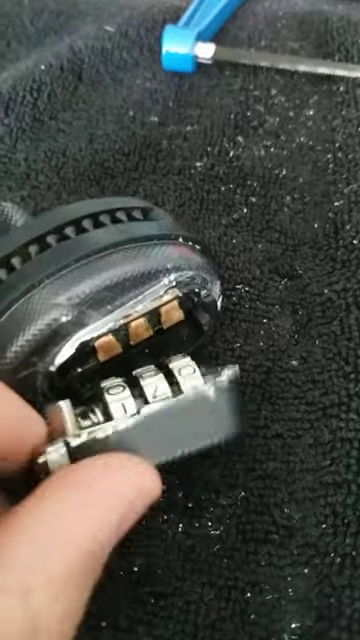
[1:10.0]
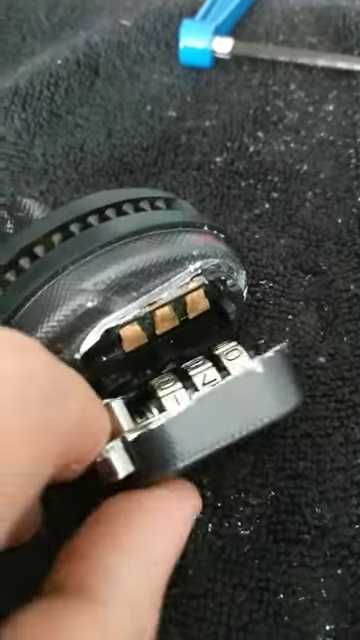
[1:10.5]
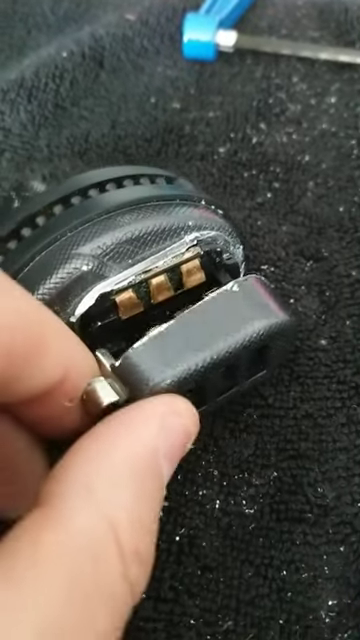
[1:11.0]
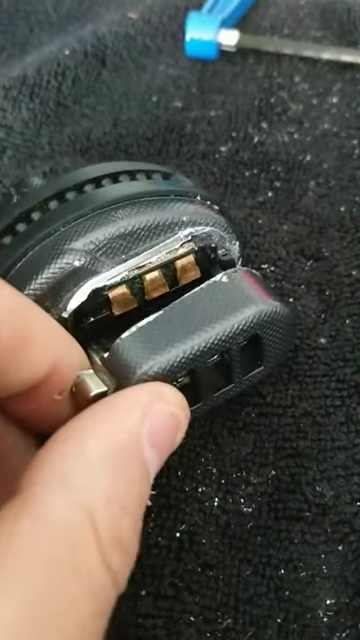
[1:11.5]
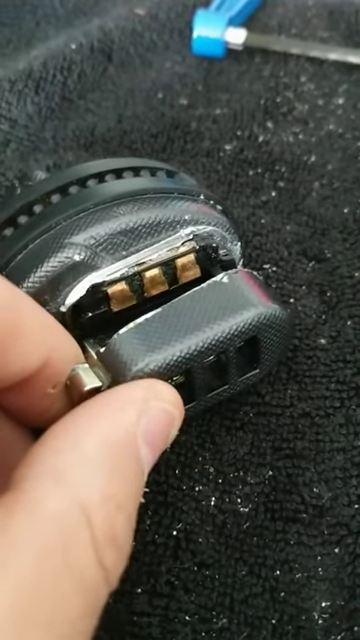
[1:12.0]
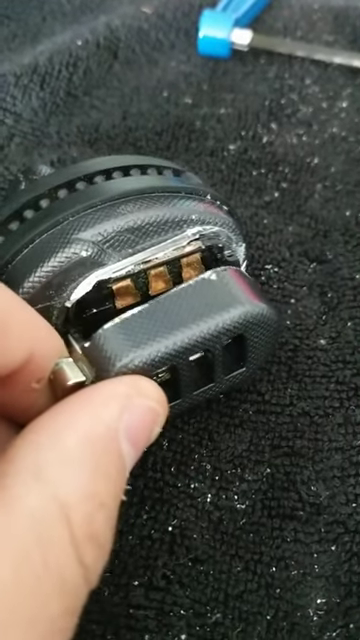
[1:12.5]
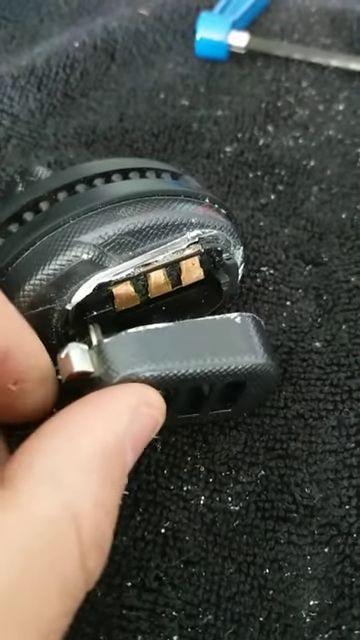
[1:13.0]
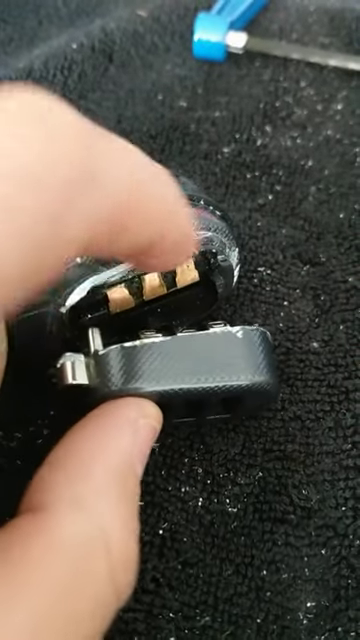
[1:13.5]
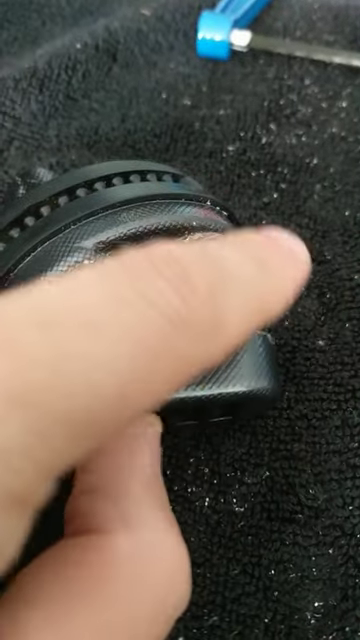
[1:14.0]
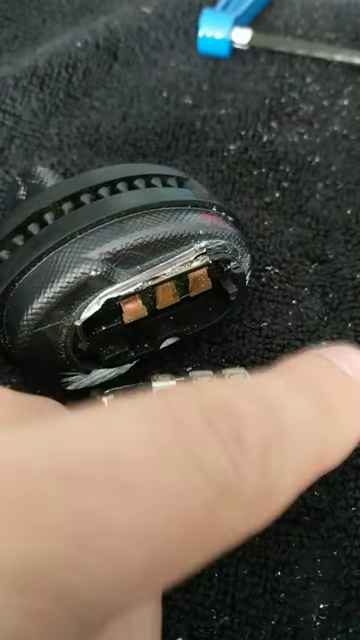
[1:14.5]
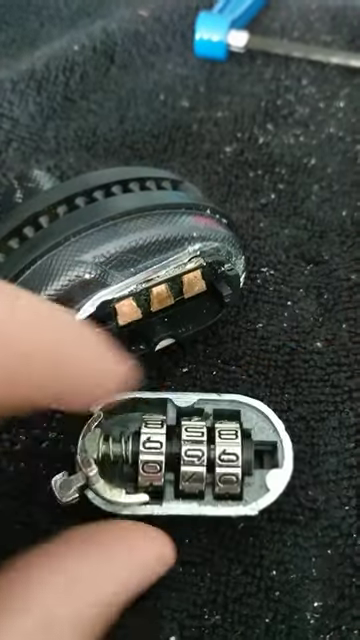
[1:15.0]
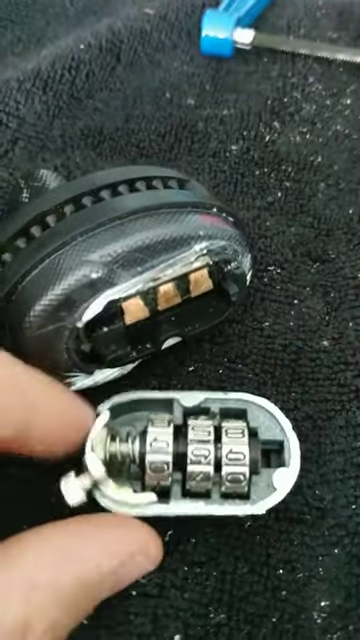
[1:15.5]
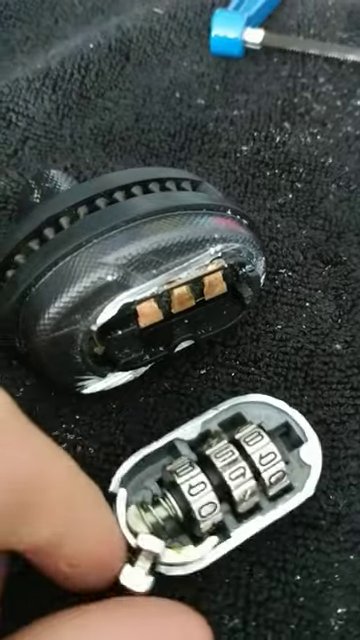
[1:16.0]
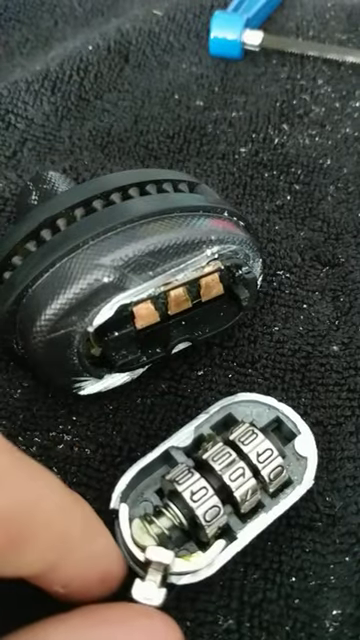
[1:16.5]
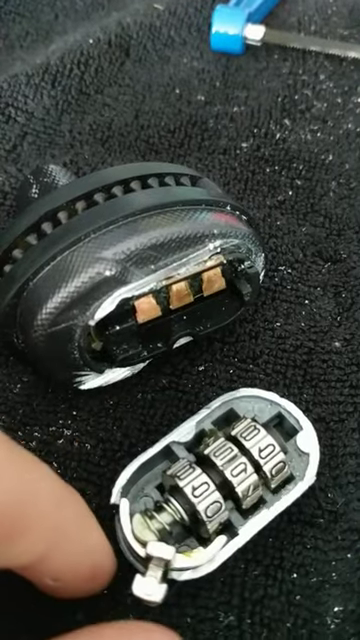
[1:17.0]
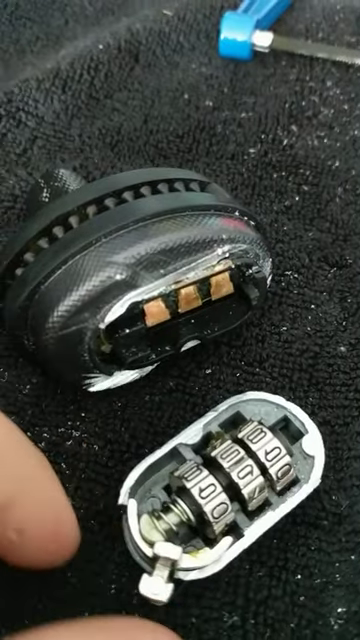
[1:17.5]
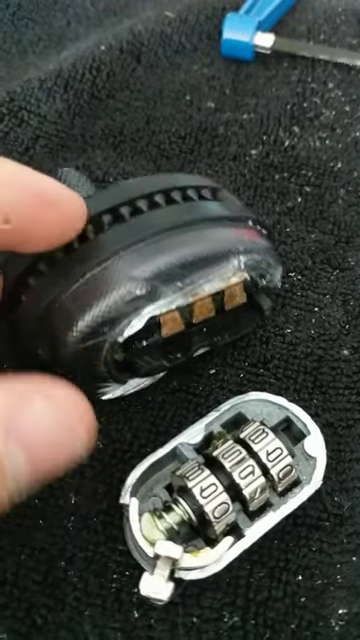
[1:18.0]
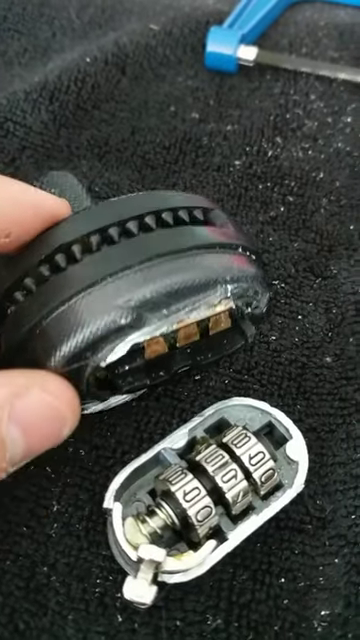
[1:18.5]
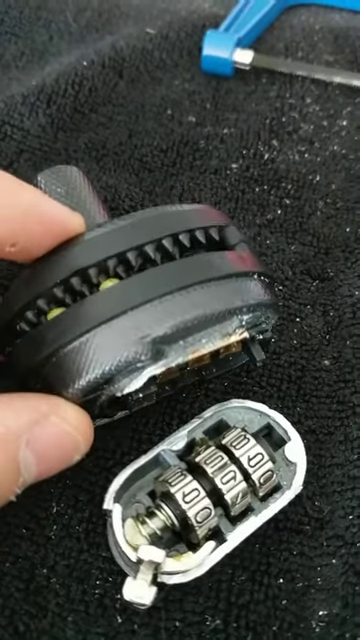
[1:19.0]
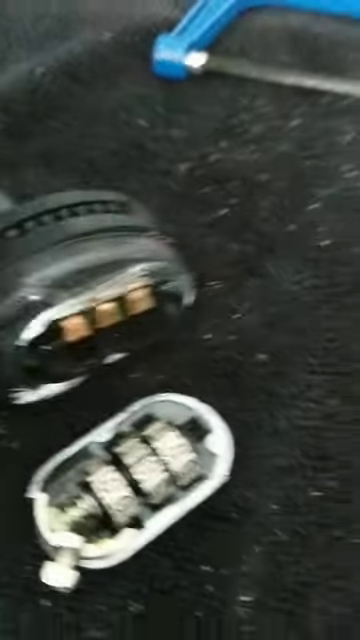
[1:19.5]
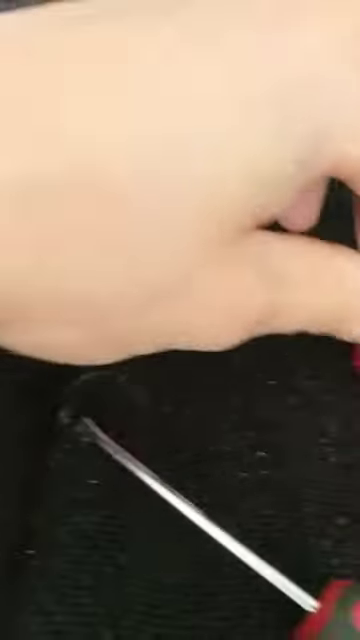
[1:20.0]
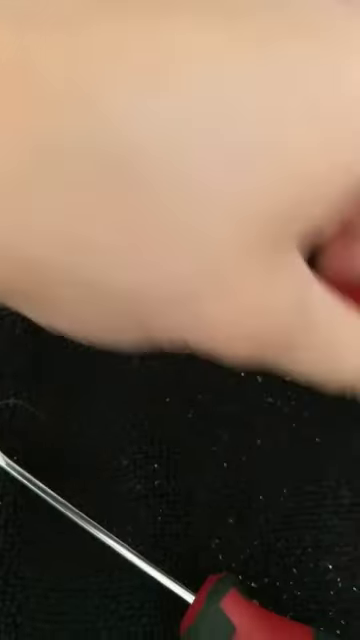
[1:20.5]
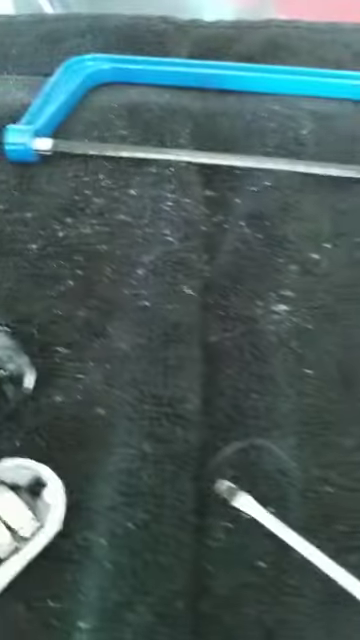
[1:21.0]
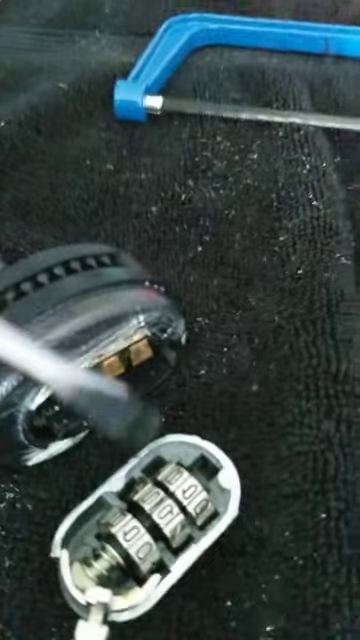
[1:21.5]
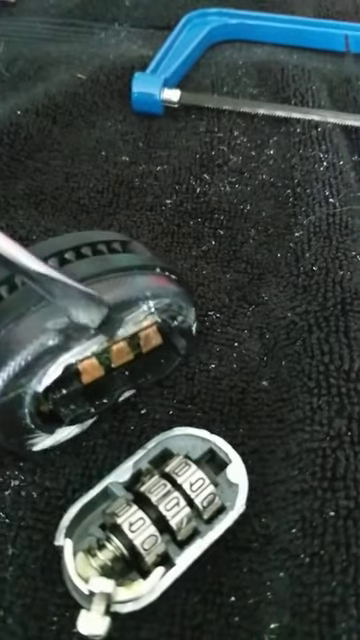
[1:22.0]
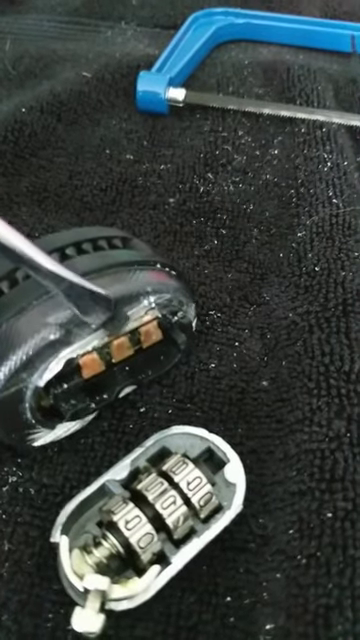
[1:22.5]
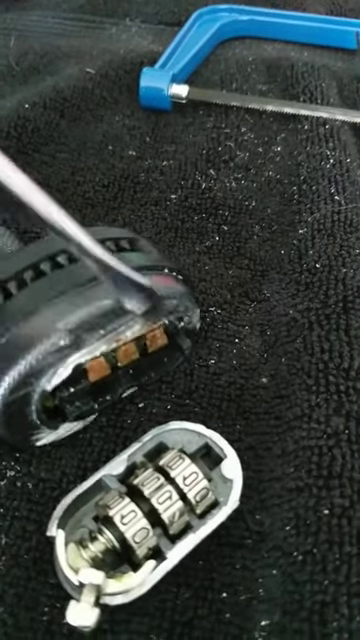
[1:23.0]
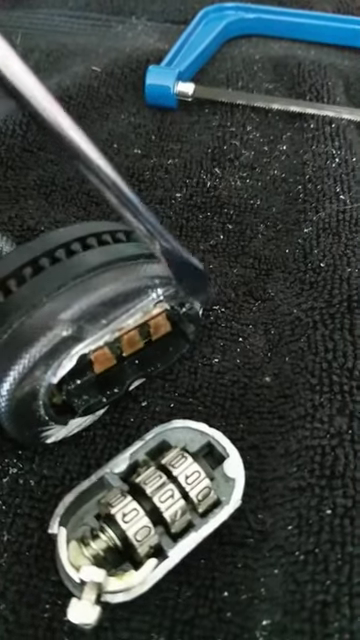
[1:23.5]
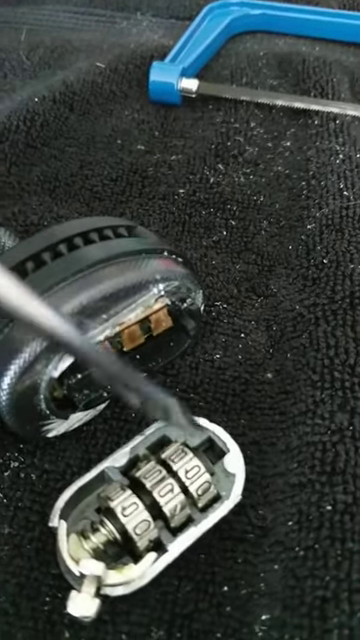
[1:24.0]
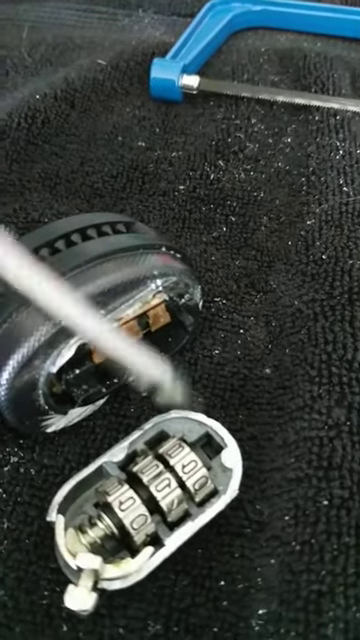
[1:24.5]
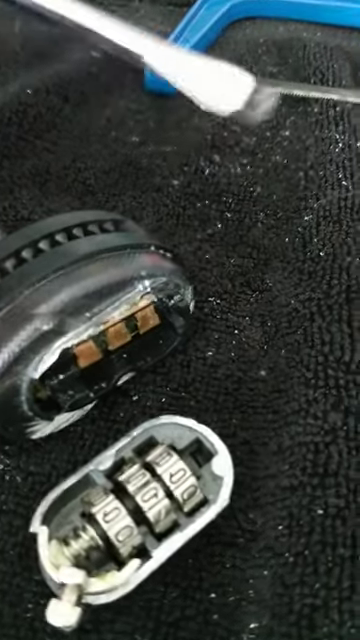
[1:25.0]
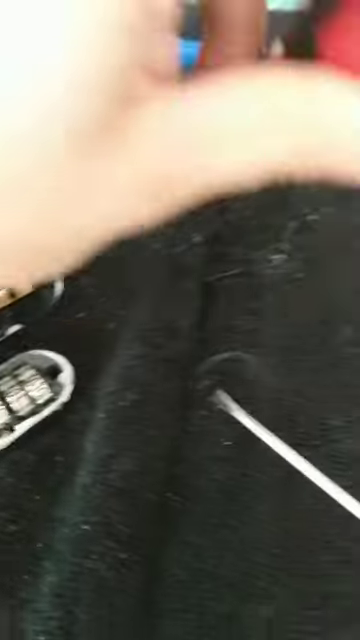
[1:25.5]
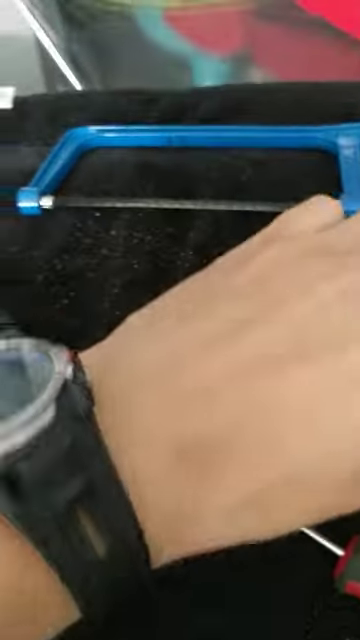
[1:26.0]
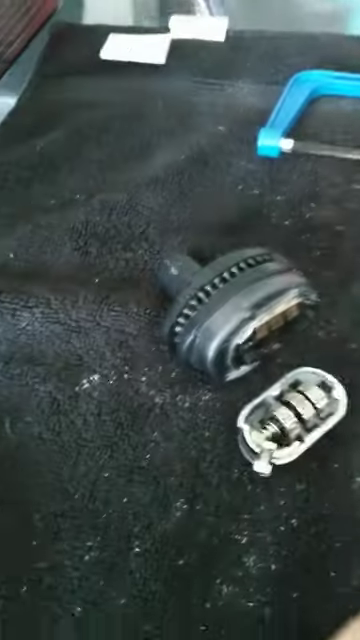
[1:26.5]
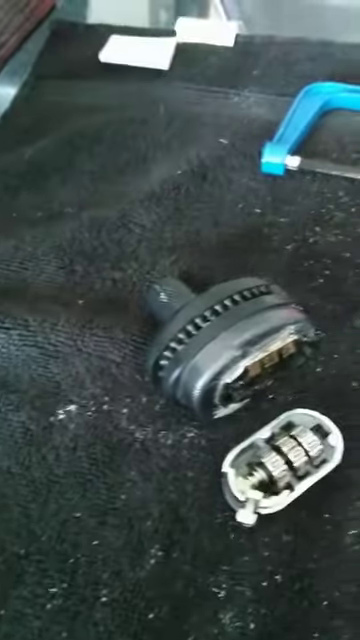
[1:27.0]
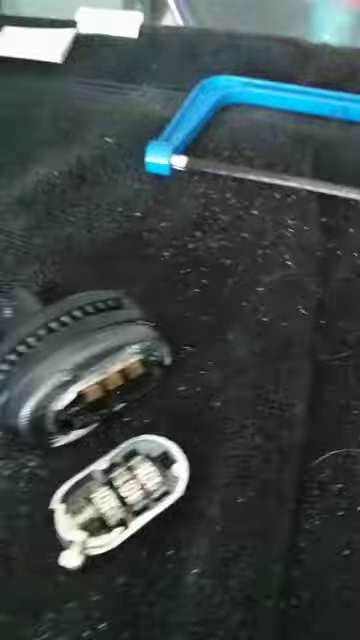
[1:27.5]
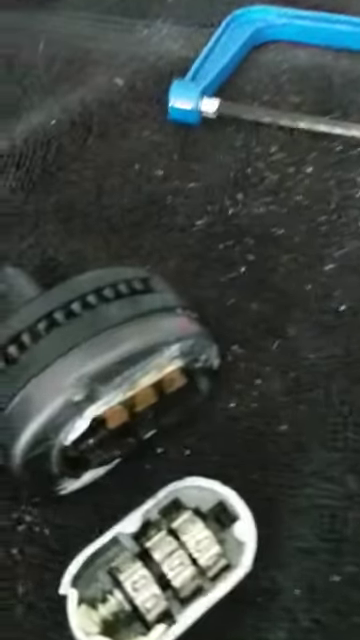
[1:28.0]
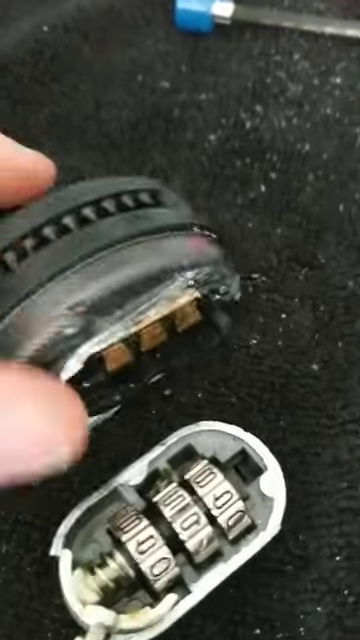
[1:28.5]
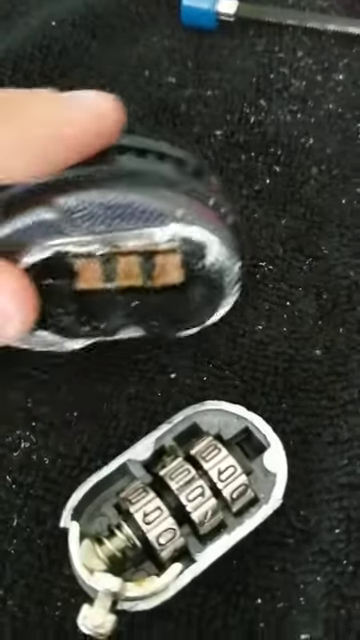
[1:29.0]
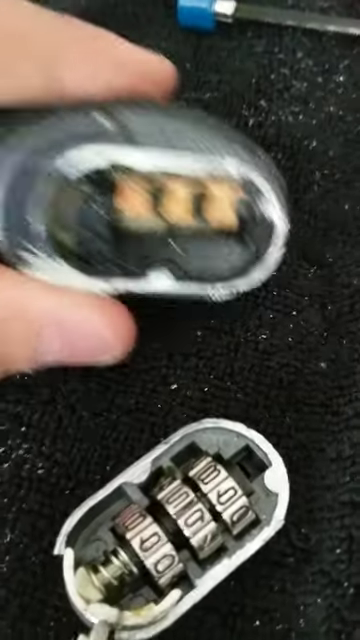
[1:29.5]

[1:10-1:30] The finger grabs the smaller part of the damaged key lock and, as the hand attempts to connect it with the larger chunk, drops it back onto the uneven black background table. Half of the hacksaw, with its blue handle and sharp metal part, is on the black background. The finger stretches out to grab one of the screwdrivers on the black table, and the video zooms out to reveal that both screwdrivers have red handles. The finger places the screwdriver on the metal part of the larger chunk, uses it to touch the motherboard underneath the larger chunk, and then puts the screwdriver back in its original position.